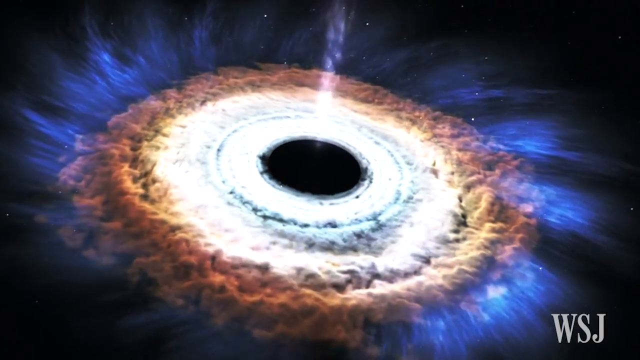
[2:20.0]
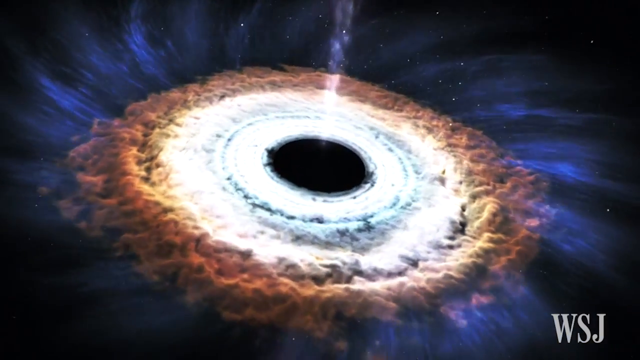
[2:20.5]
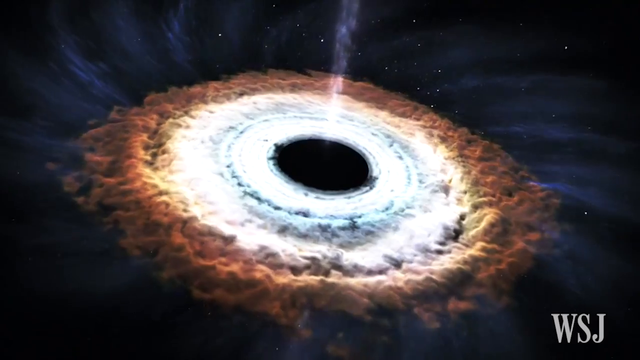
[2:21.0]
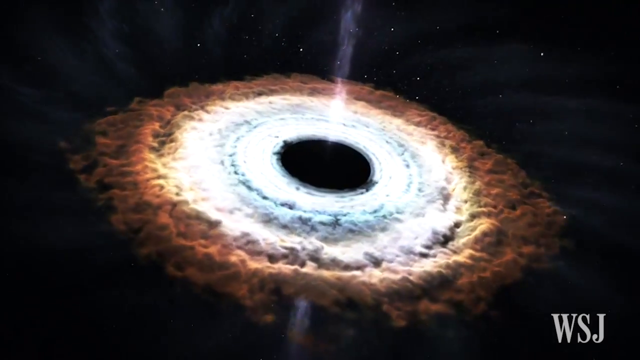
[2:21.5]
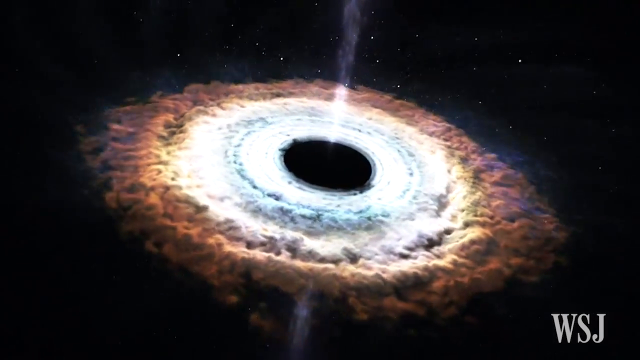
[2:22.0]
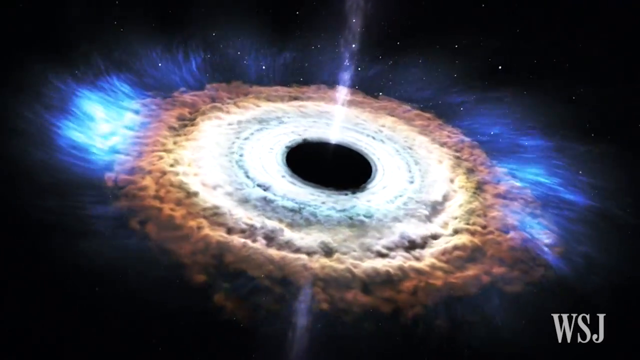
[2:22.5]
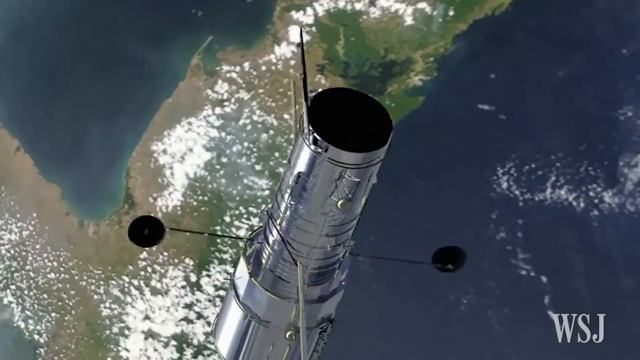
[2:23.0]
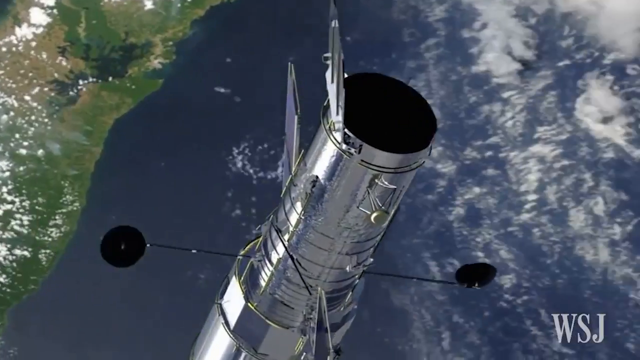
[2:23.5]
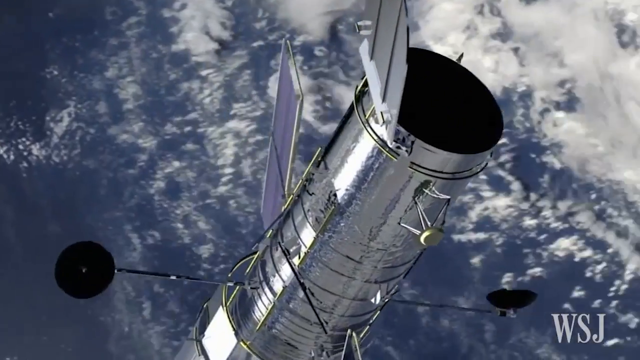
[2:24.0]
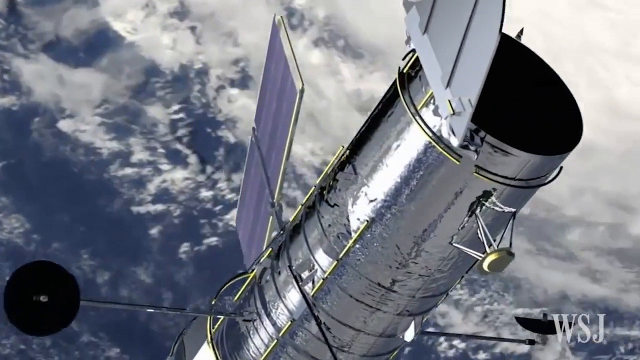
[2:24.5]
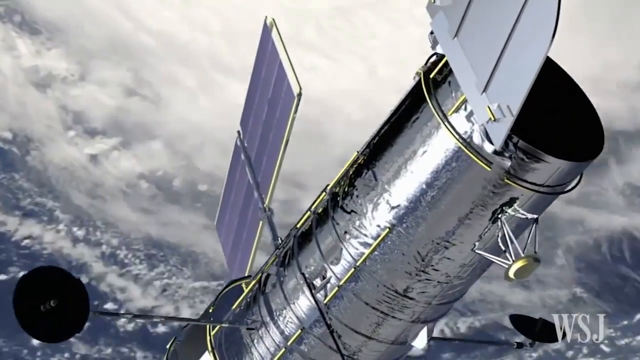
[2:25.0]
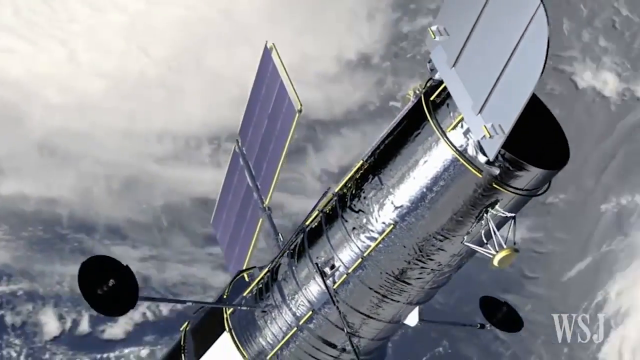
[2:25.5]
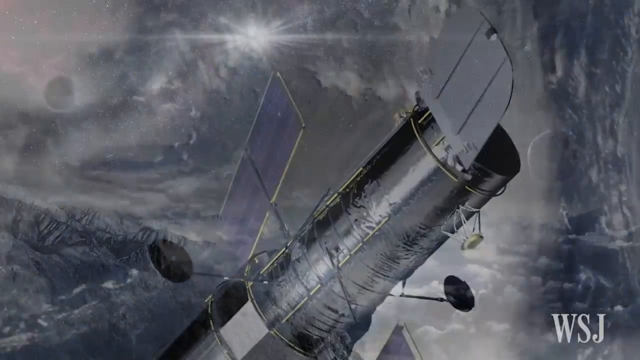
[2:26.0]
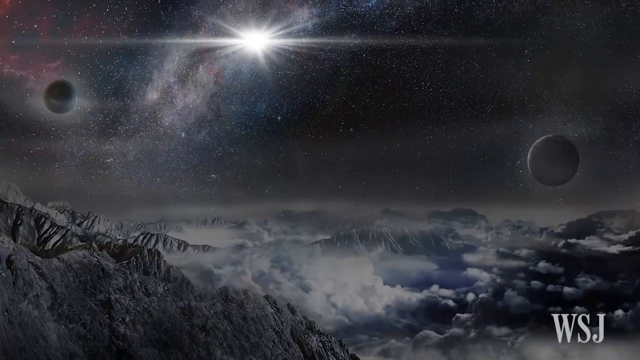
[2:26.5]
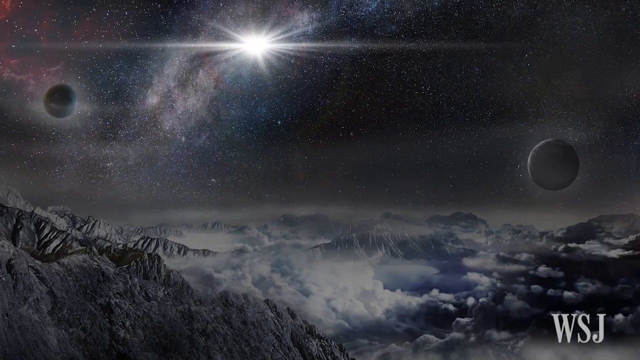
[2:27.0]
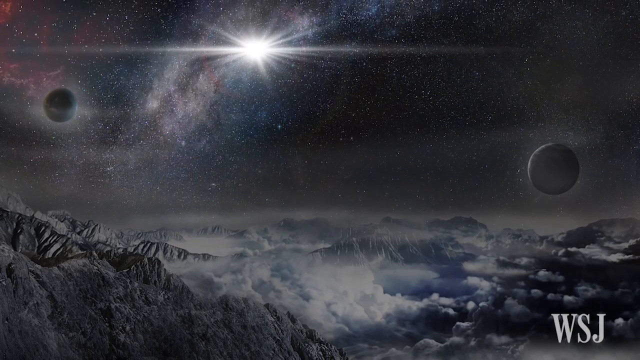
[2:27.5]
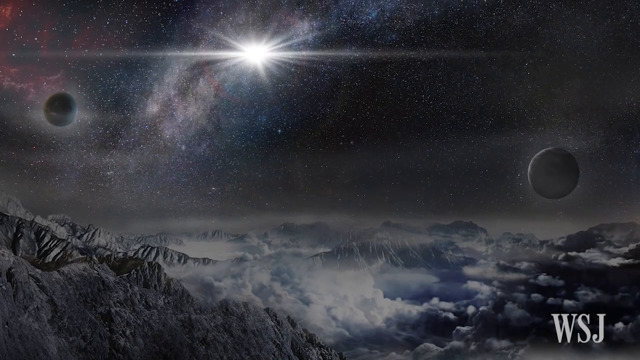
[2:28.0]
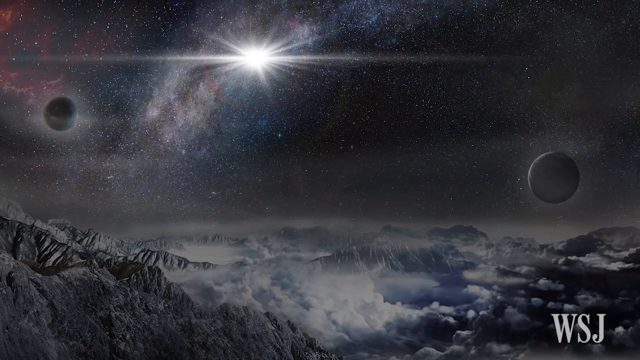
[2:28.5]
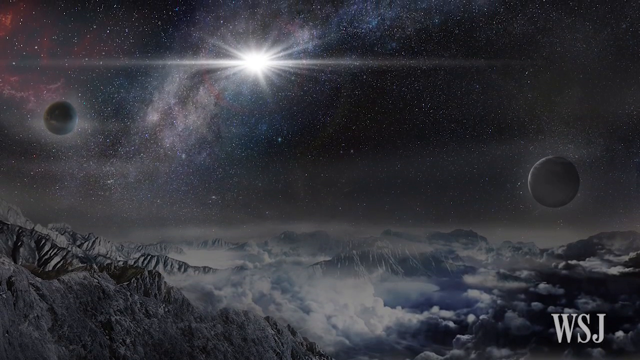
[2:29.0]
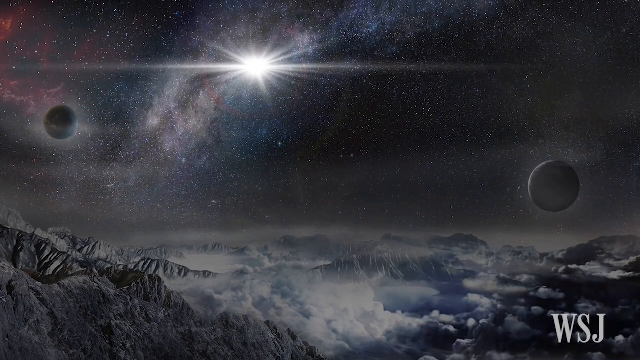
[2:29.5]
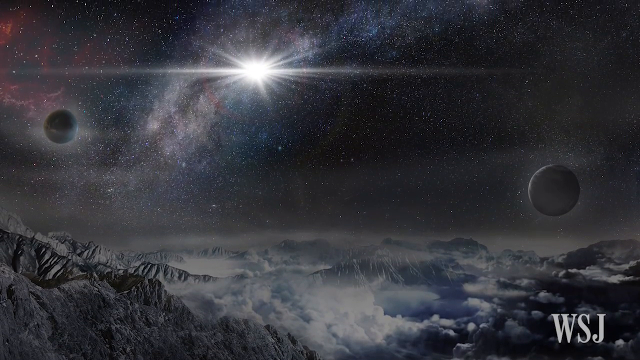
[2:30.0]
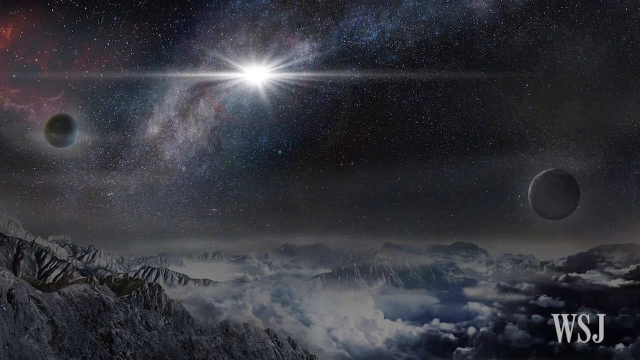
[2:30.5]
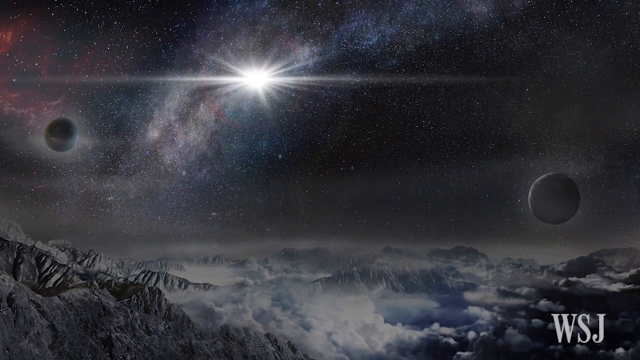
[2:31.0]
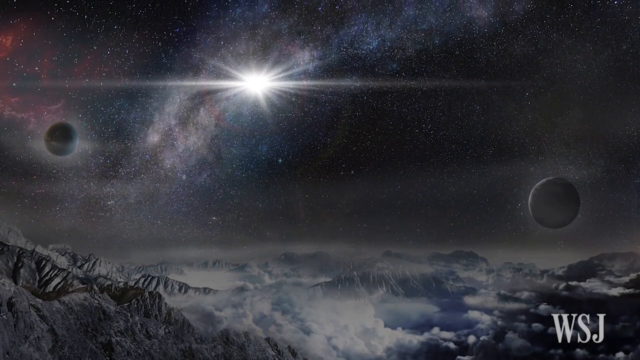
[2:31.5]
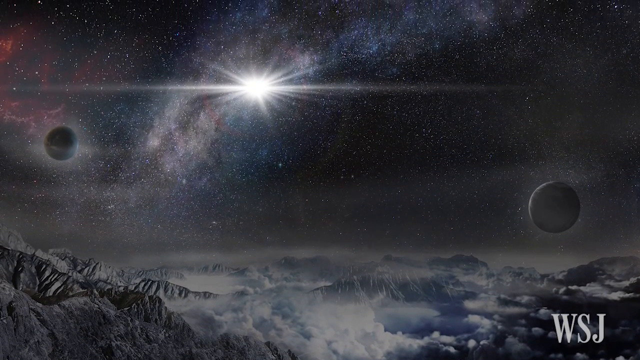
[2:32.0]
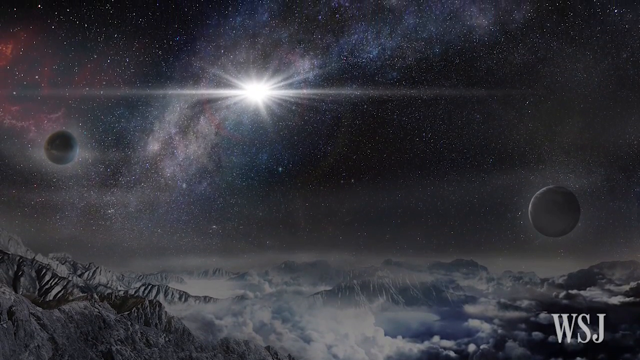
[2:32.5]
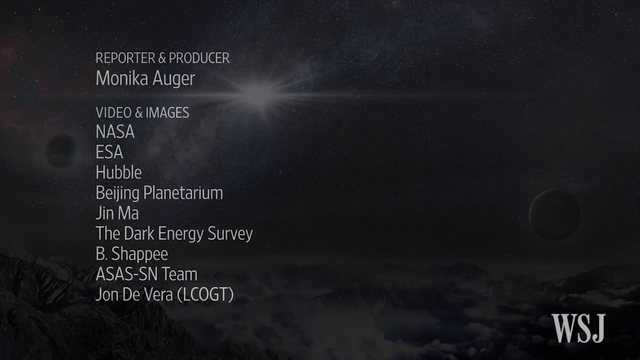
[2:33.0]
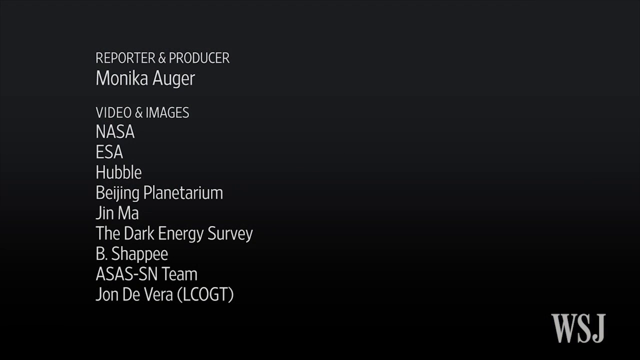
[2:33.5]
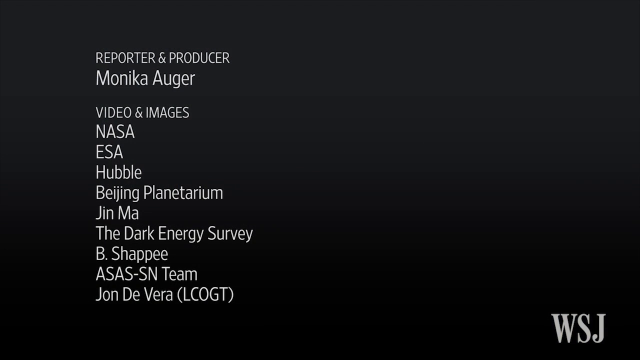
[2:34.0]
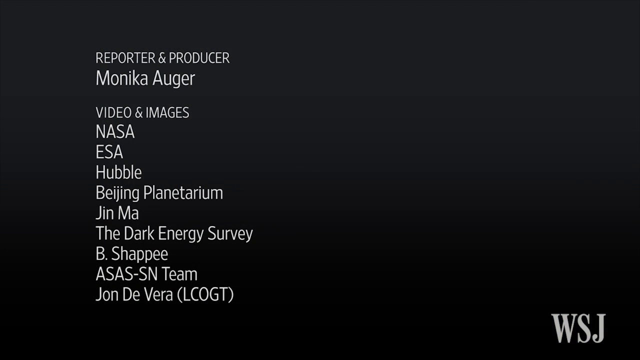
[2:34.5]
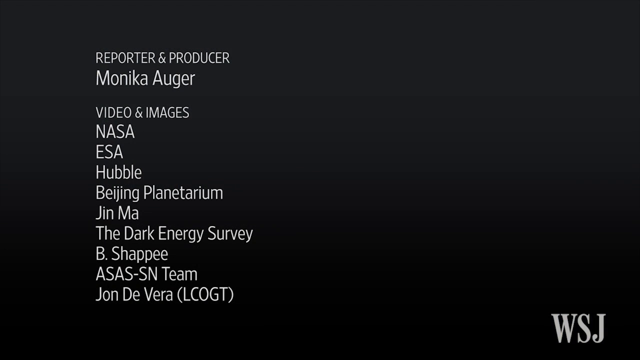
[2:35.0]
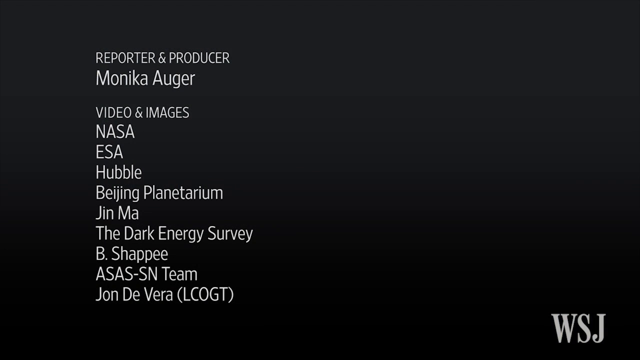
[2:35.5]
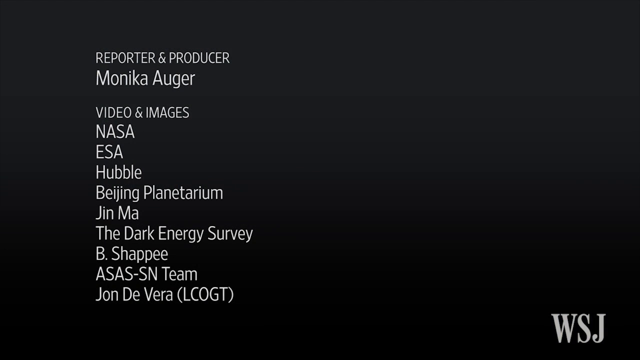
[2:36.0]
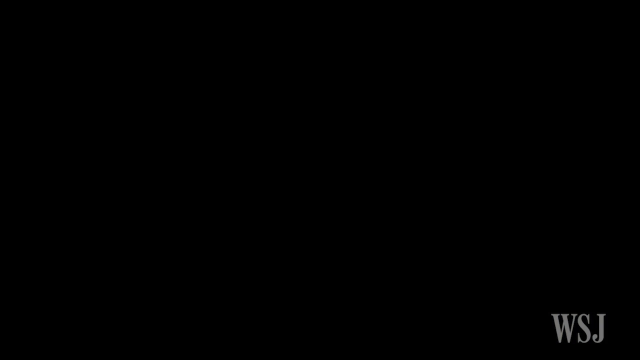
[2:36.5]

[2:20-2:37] What appears to be a black hole is shown. Then a probe, a satellite, appears above the Earth, and the video returns to an image seen several times before: a rocky planet surface with clouds or steam amongst the rocks, a moon close by, a second moon further out, a white star in the distance, and beyond that many thousands of stars in the night sky. Credits follow: the reporter and producer was Monika Auger, and the videos and images come from NASA, the European Space Agency, the Hubble Telescope, the Beijing Planetarium, Jin ma, the Dark Energy Survey, B Shappee, the ASAS-SN Team, and John De vere of LCOGT.